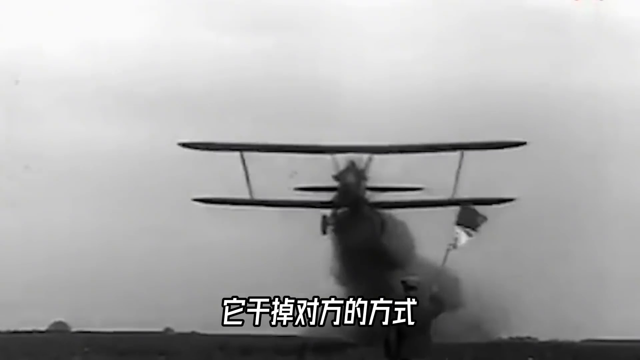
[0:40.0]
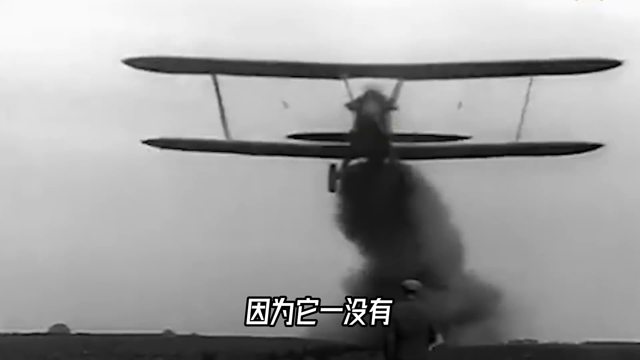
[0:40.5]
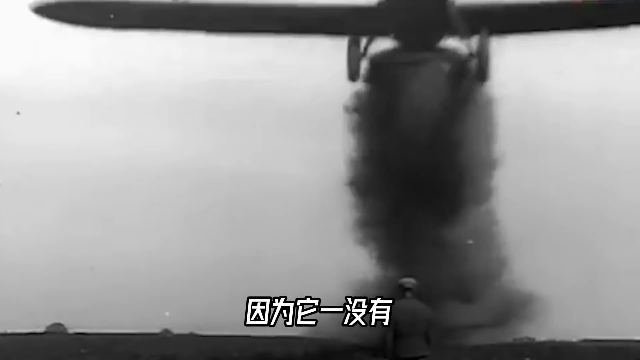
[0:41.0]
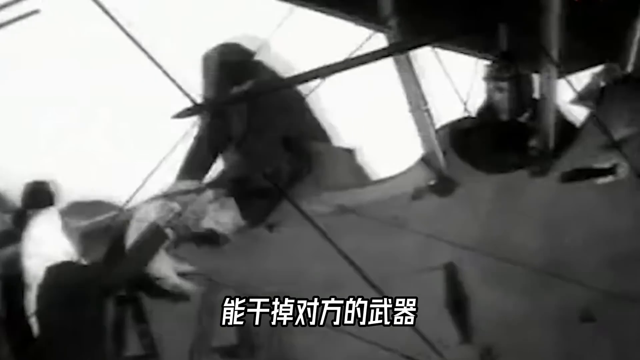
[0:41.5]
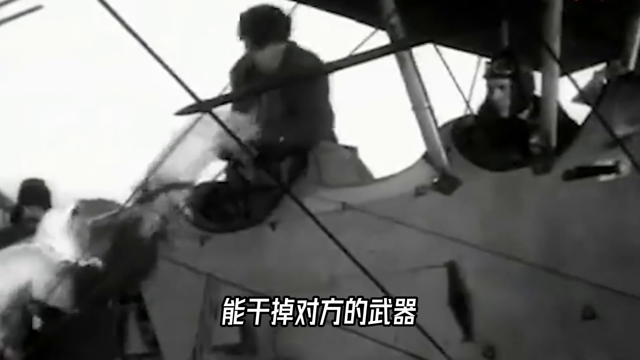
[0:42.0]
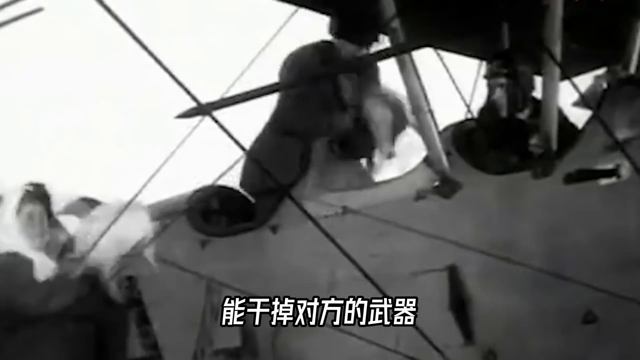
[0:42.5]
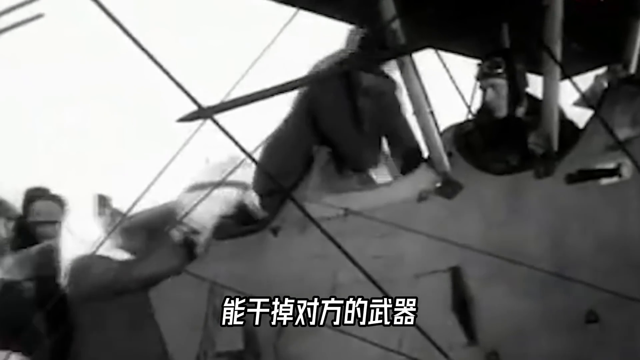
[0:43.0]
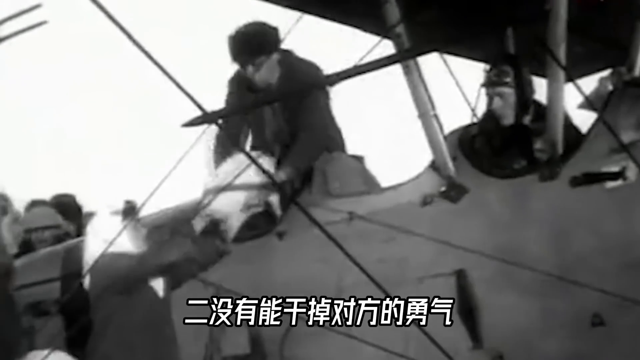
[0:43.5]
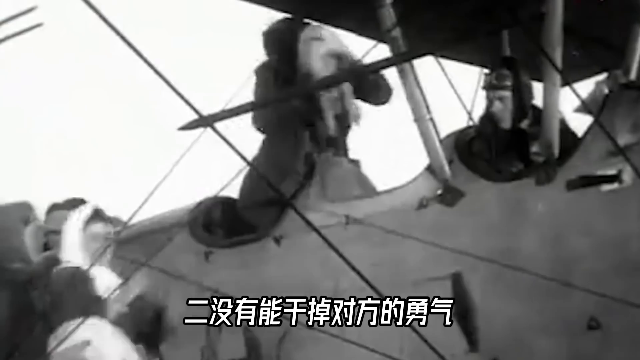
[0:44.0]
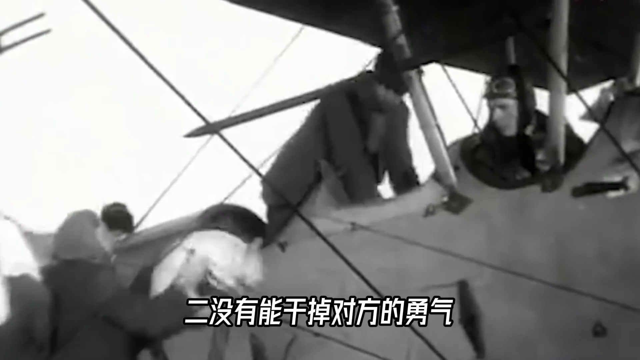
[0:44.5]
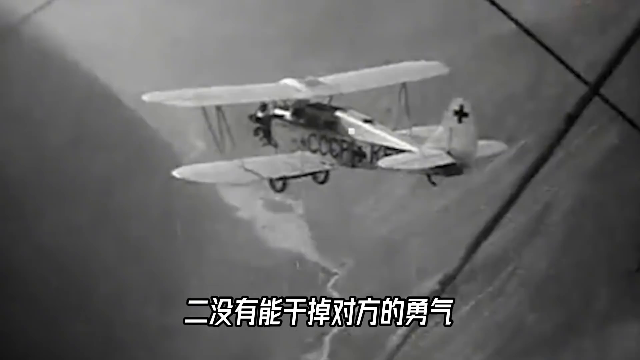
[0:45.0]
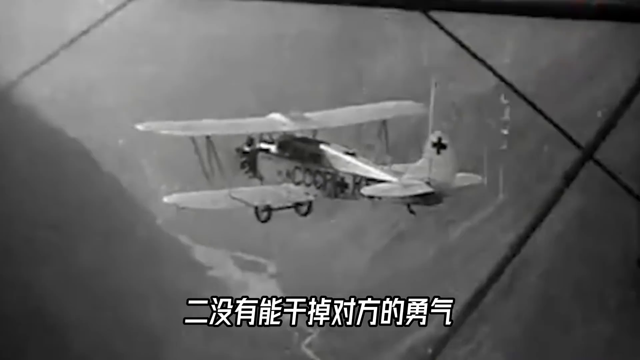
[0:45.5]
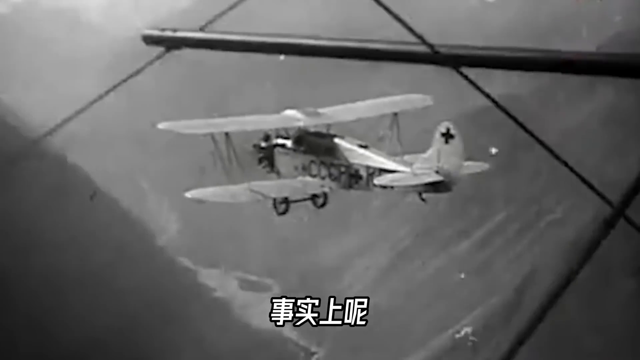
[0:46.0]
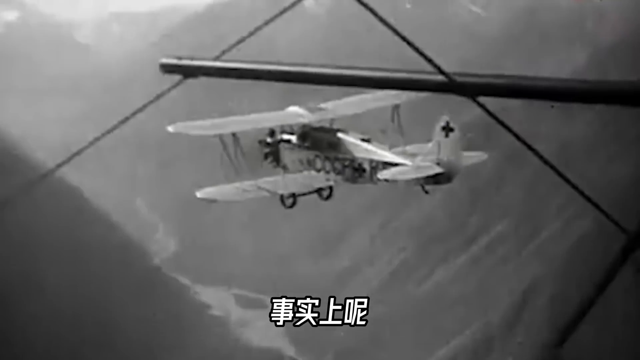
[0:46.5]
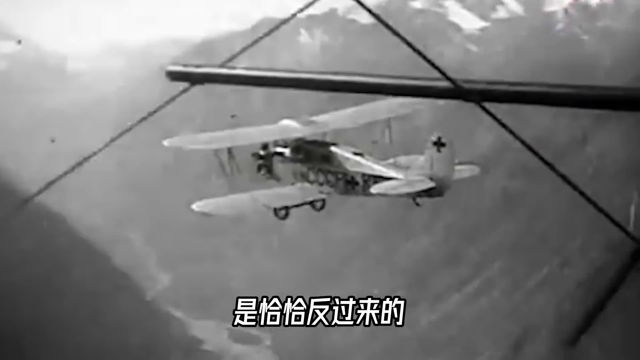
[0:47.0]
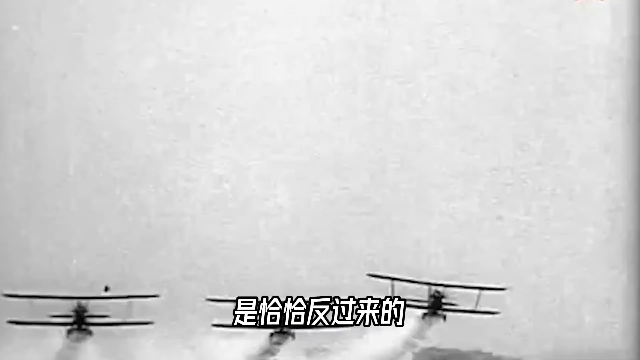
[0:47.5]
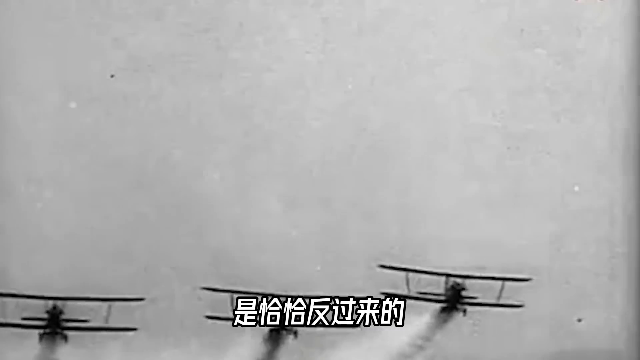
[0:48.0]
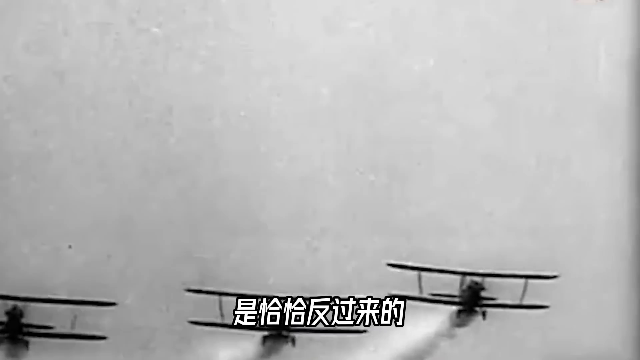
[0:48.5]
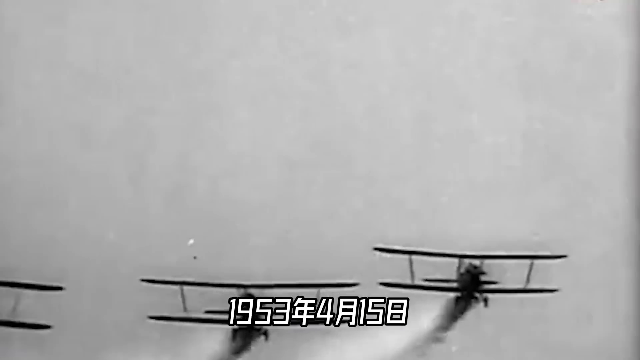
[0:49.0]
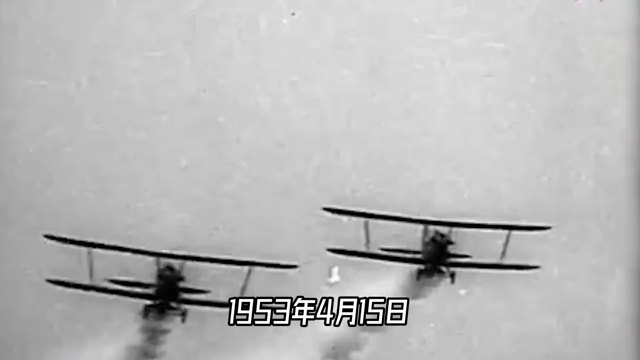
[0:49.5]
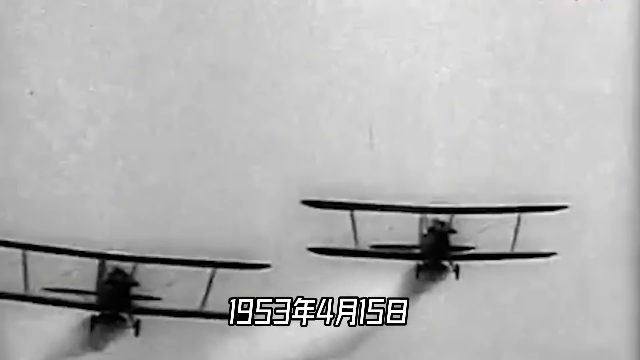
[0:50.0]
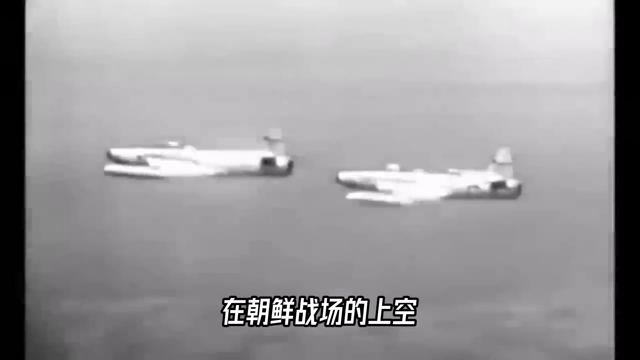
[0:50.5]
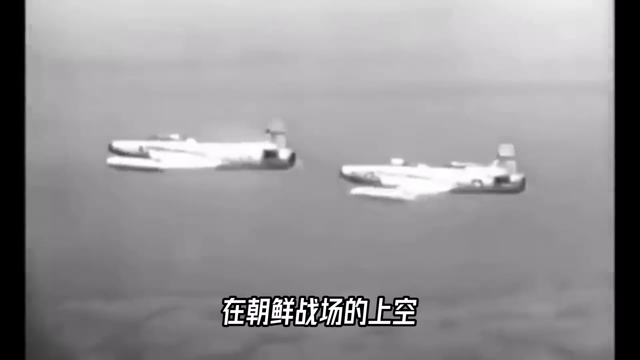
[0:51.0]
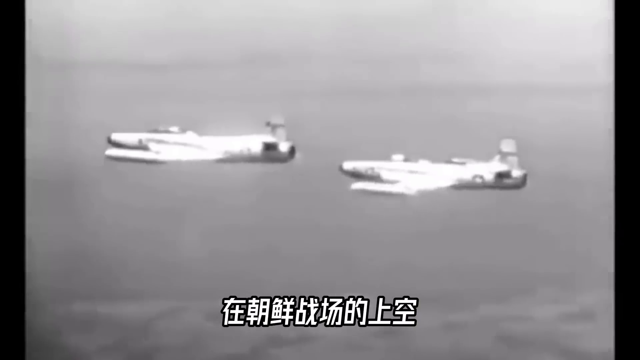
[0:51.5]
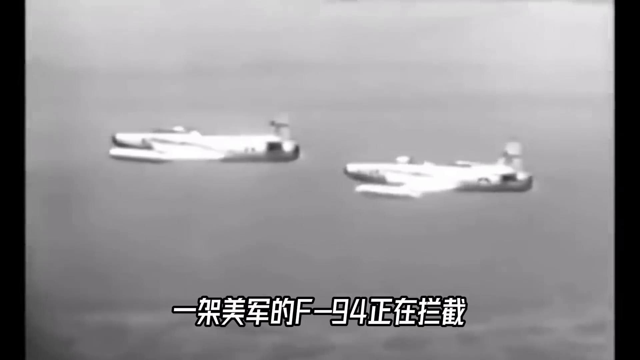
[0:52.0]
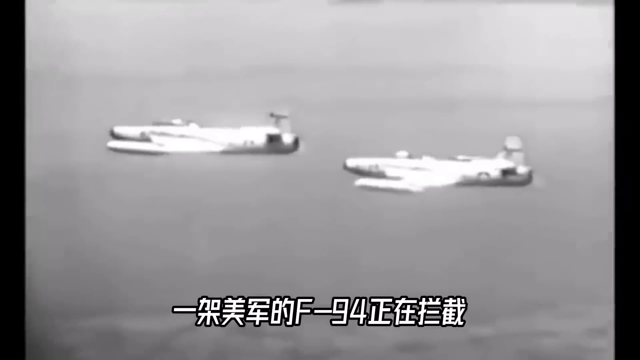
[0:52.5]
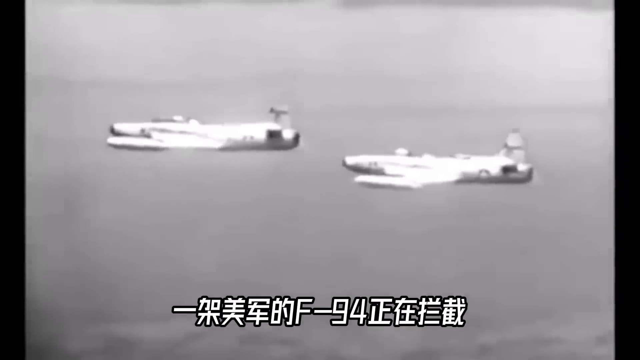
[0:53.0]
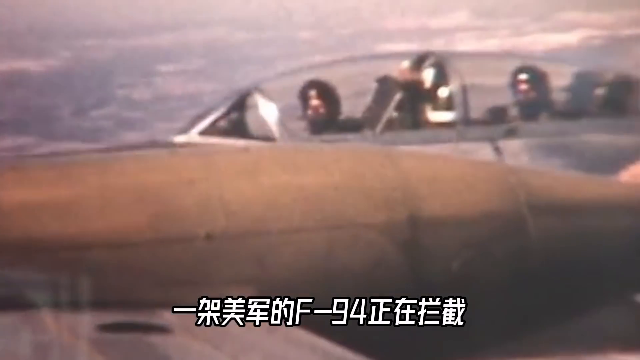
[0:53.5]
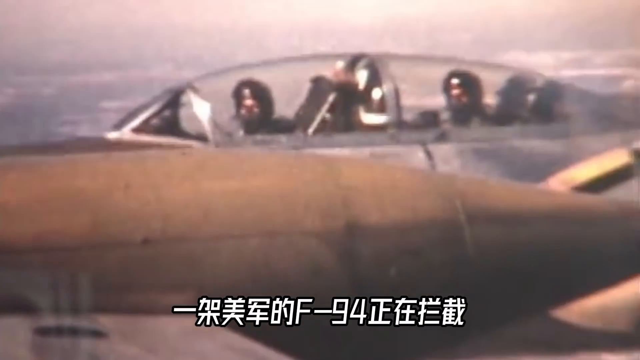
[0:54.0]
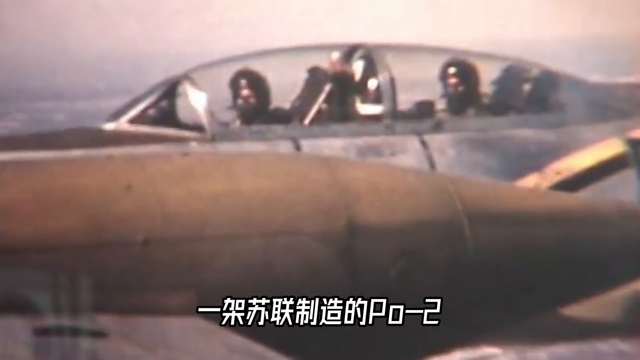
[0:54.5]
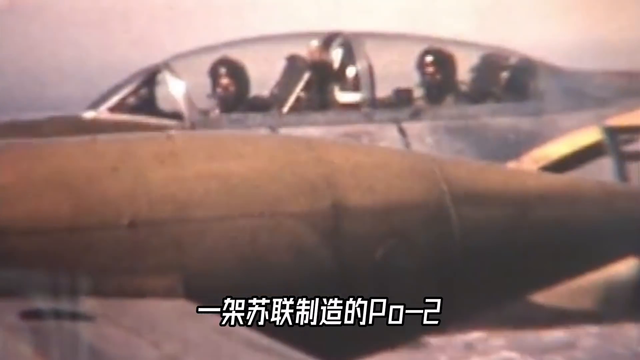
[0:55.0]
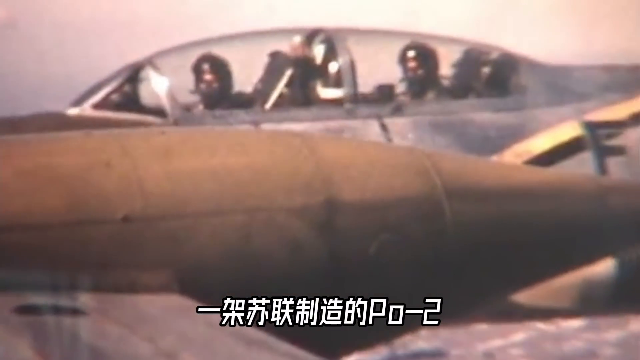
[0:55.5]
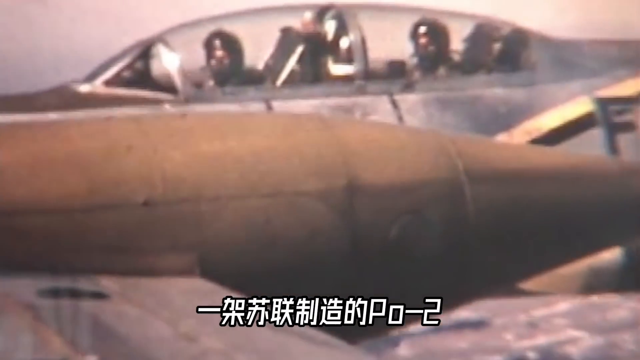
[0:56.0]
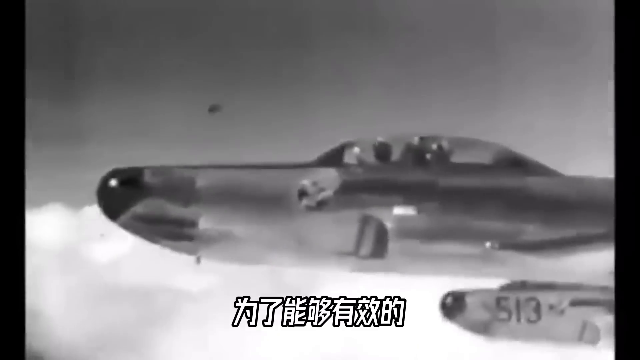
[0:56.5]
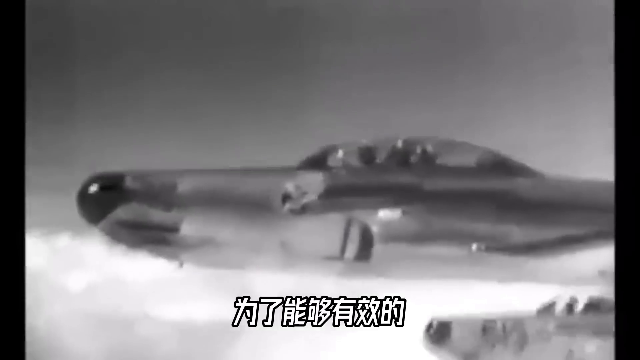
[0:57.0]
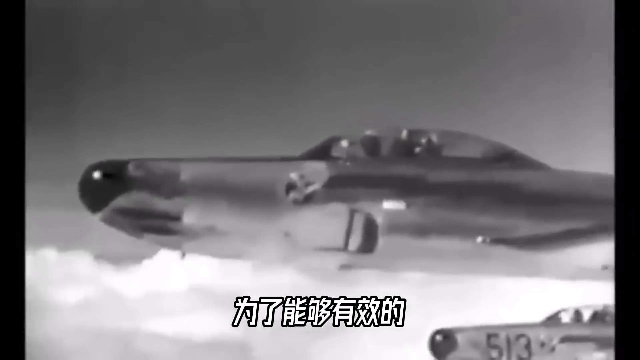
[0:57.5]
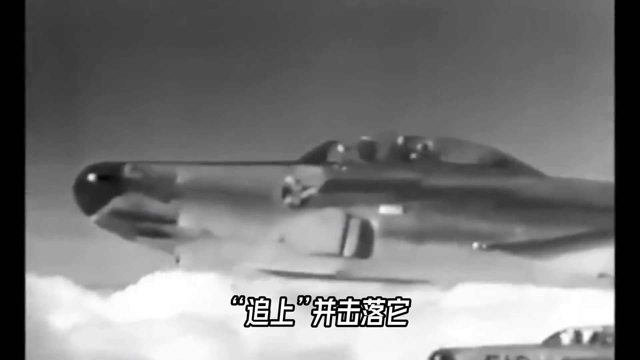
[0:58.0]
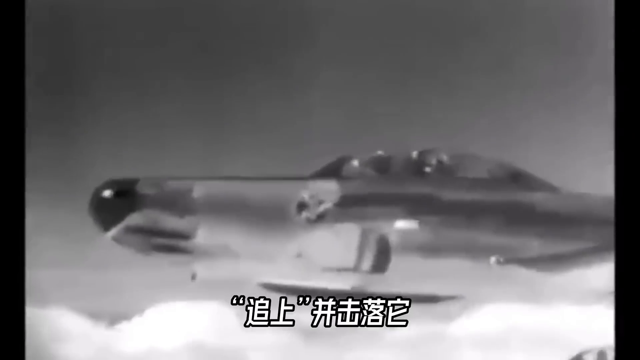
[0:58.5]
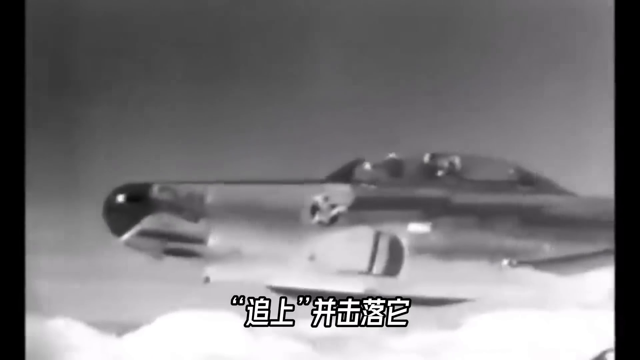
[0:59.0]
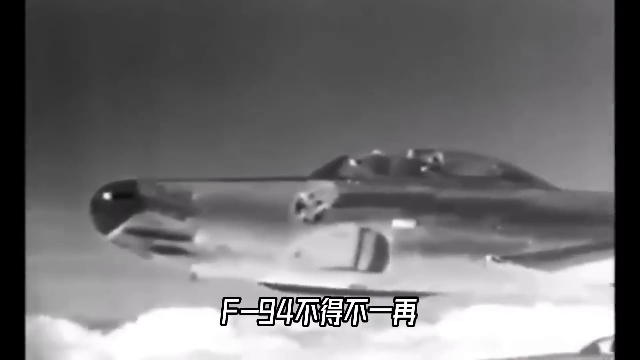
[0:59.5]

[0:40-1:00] A close-up black-and-white scene shows men loading an old-fashioned propeller plane that is open to the sky; they put what looks like a pig into one of the plane's compartments. The video switches to different scenes of fighter planes, some more modern, still in black and white, with a caption in Chinese or Japanese across the bottom of the screen. A color shot then shows a close-up of the cockpit of a more modern fighter jet, with two men inside wearing helmets and masks. It switches to a black-and-white close-up of a similar plane flying through the sky, with the same shaped cockpit and basically the same shape as the other. The video appears to show the progression in shape and style of fighter planes over the years.